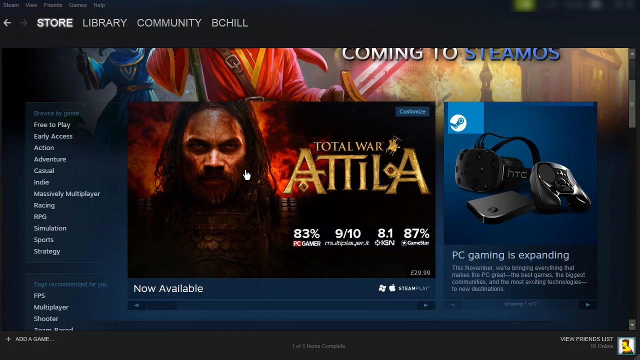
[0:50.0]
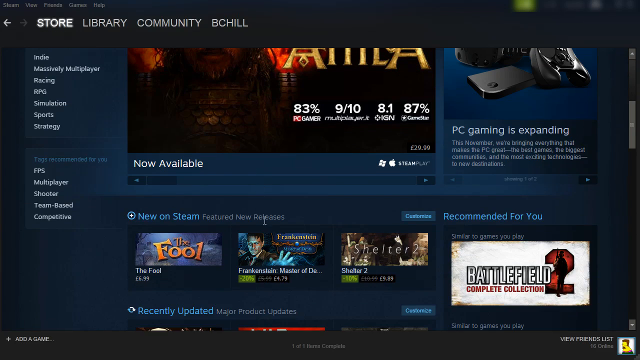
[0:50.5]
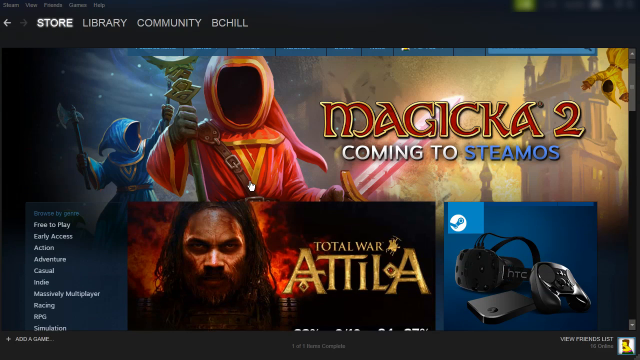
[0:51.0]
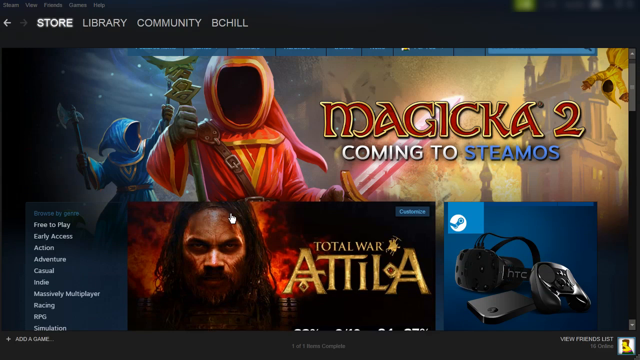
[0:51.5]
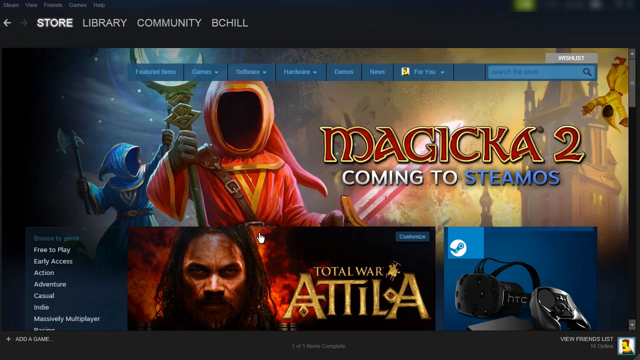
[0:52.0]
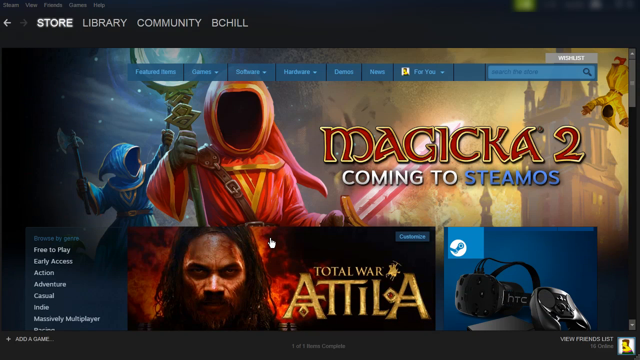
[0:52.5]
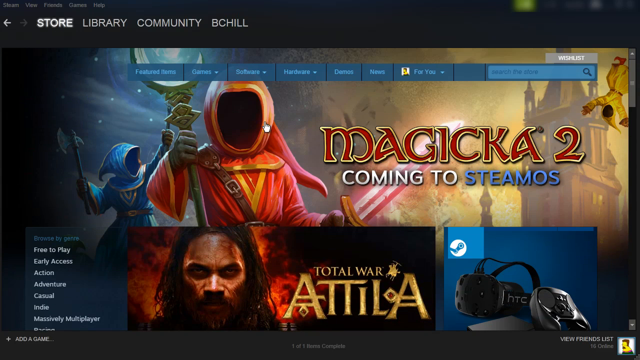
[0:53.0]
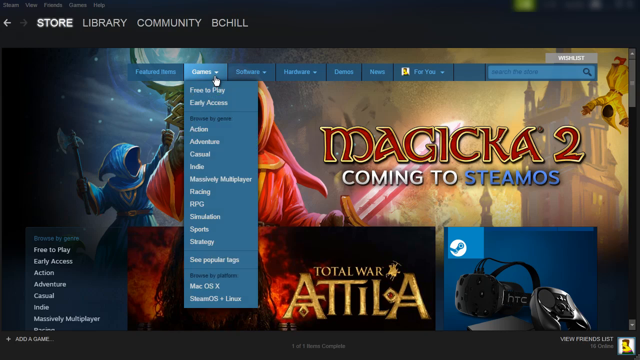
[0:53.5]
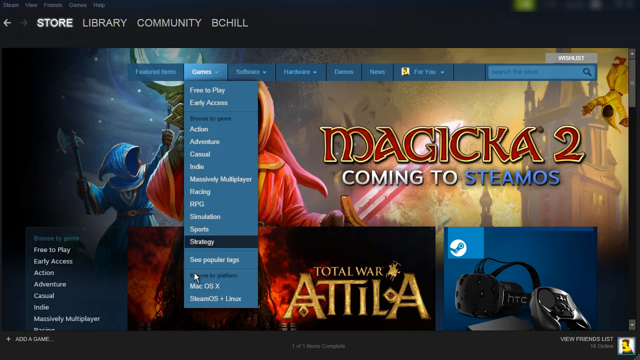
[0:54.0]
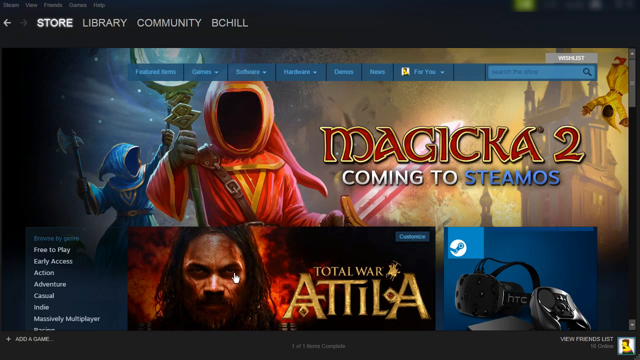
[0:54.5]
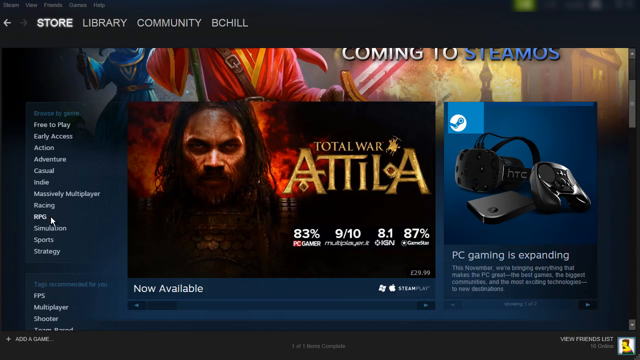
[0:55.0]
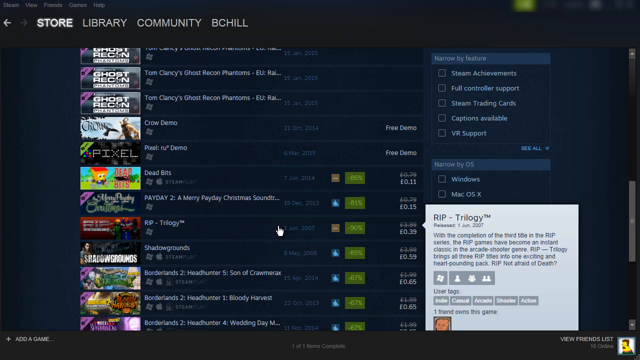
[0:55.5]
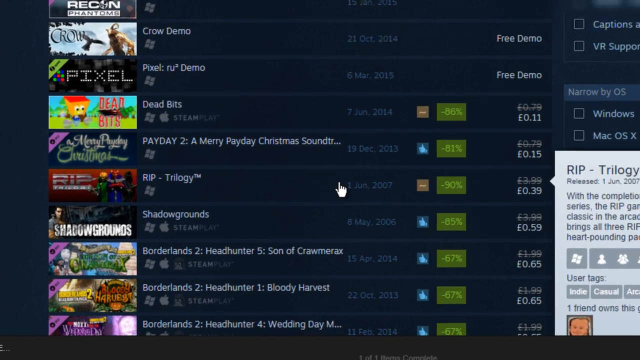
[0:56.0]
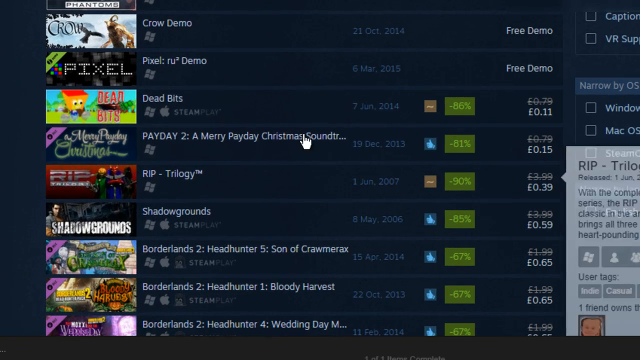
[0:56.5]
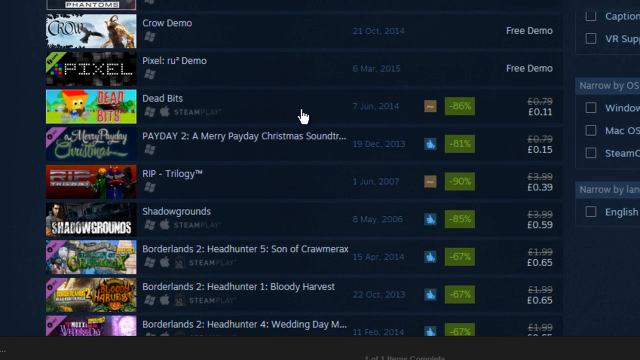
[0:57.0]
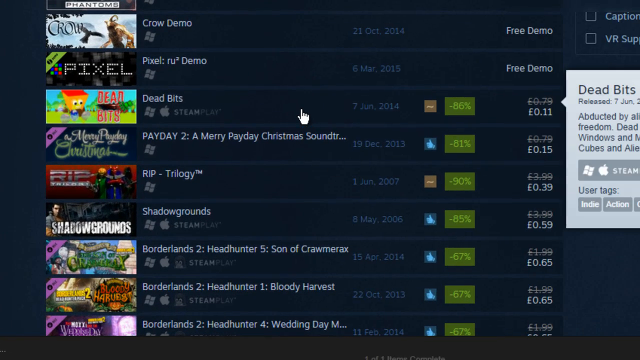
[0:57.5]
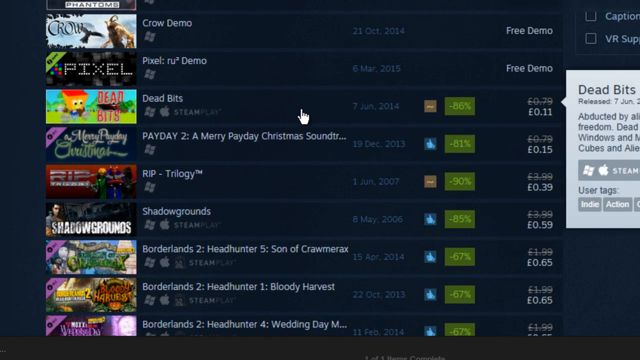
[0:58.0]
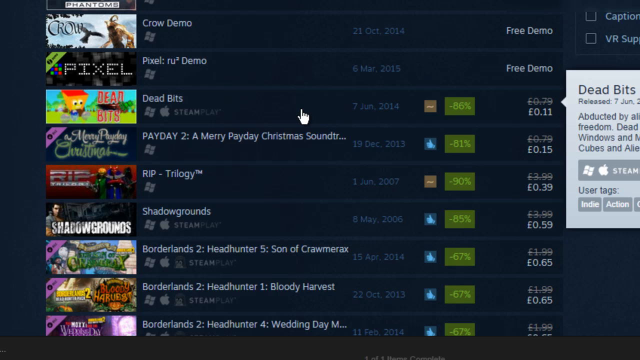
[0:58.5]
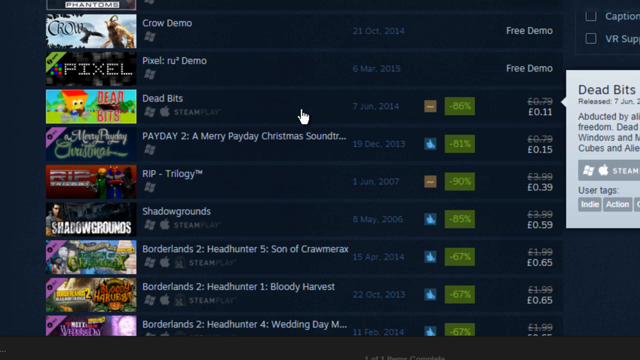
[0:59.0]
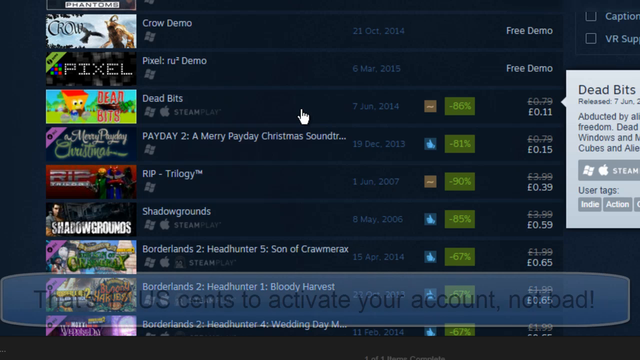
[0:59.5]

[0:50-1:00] The store front page now features a new game, Magicka 2, coming to SteamOS, with a picture of wizards in different cloaks. The first wizard, facing forward, wears an orange cloak with gold trimmings and a V on its chest and carries a staff. The wizard behind him wears the same cloak attire but in blue, and has an axe and something like a wand. The user goes to the game ribbon in the browser and scrolls down to see games, then chooses Dead Bits, released on 7 June 2014. When he clicks it, a small window pops up with information about Dead Bits: what it is about and where it can be played, on Windows, Apple or Steam Play.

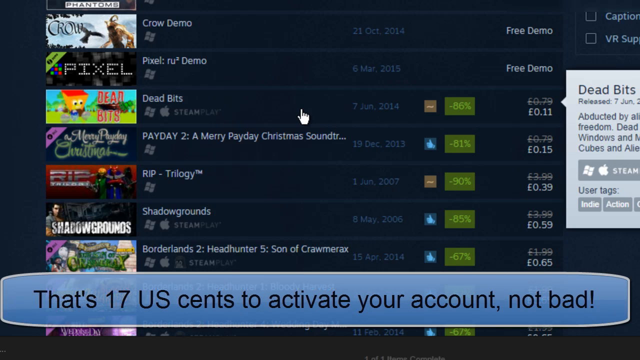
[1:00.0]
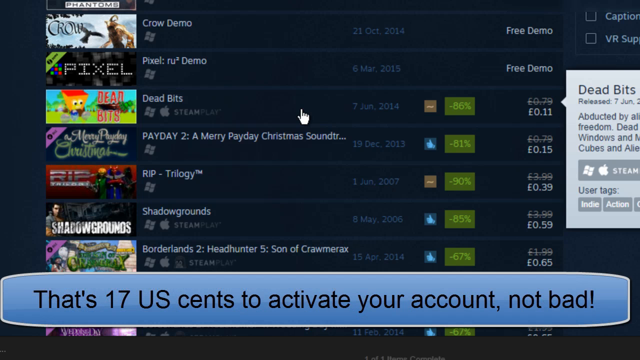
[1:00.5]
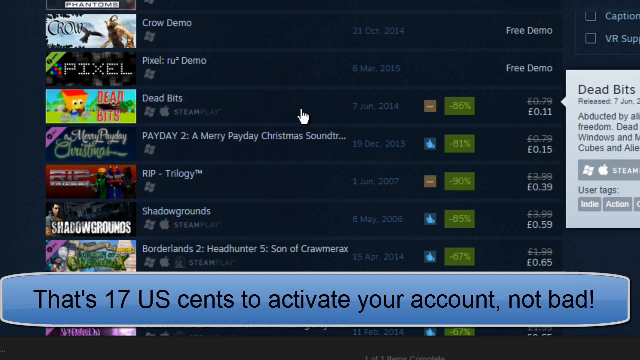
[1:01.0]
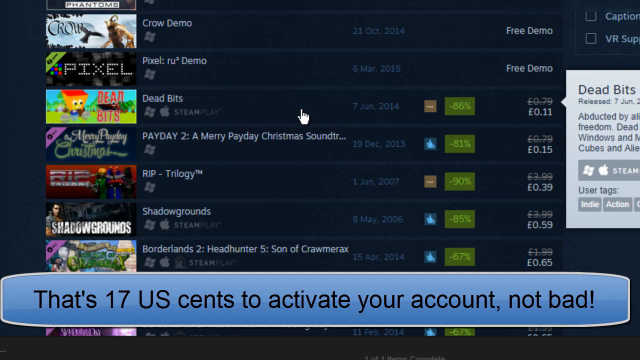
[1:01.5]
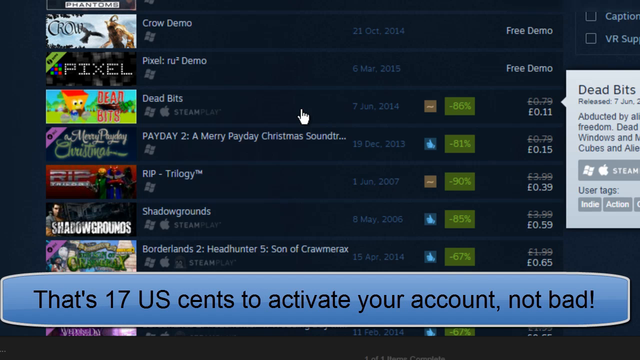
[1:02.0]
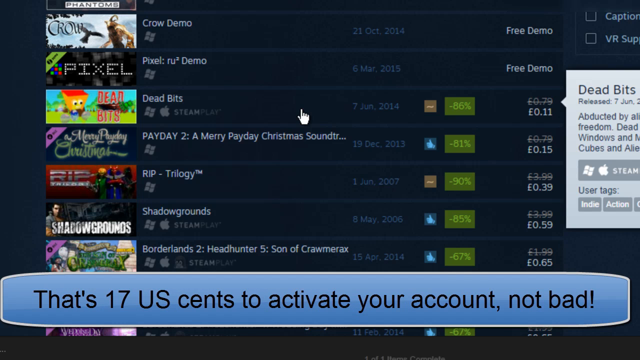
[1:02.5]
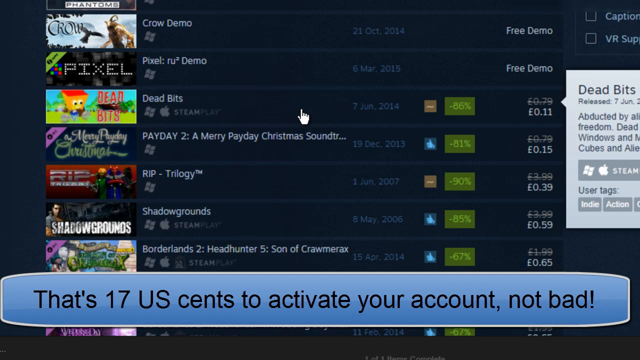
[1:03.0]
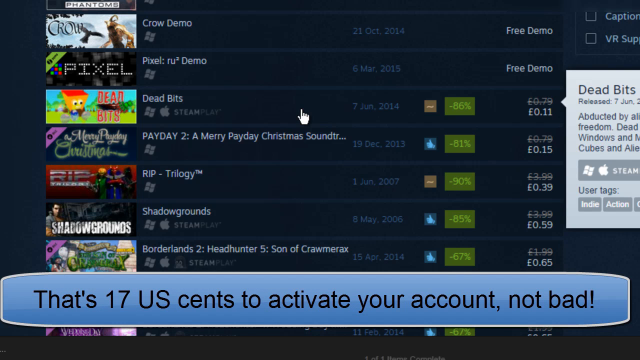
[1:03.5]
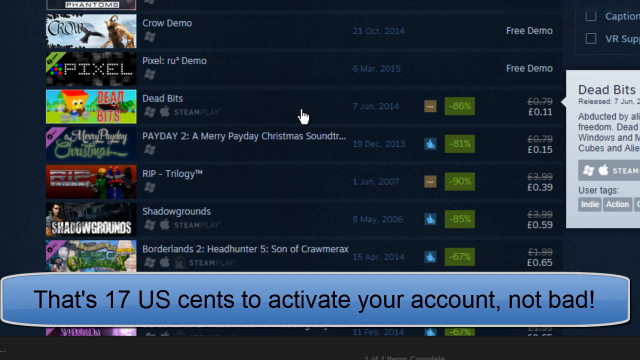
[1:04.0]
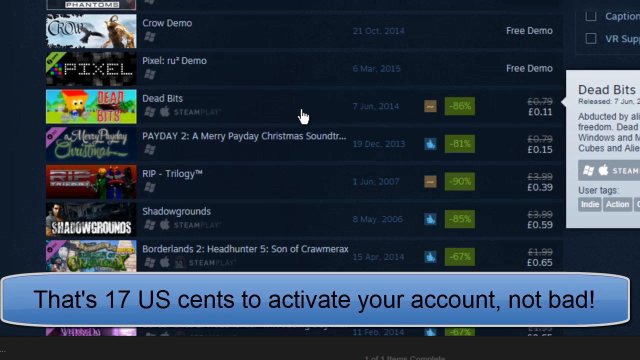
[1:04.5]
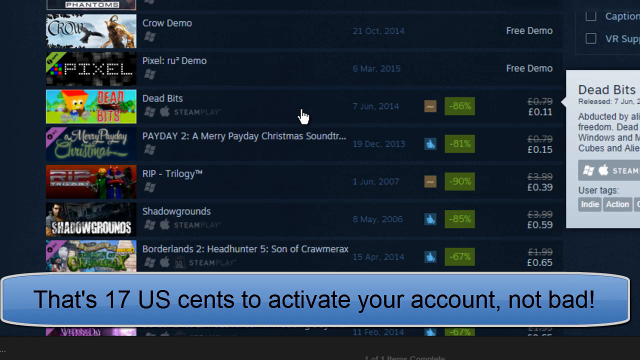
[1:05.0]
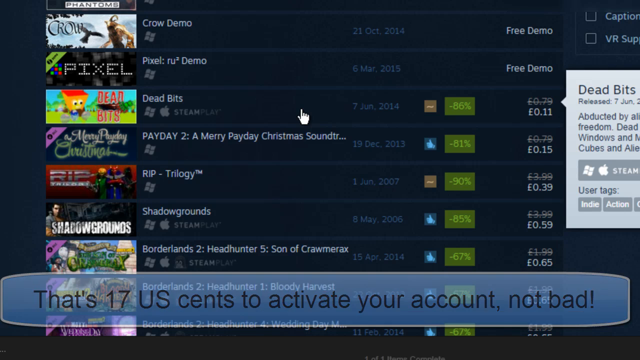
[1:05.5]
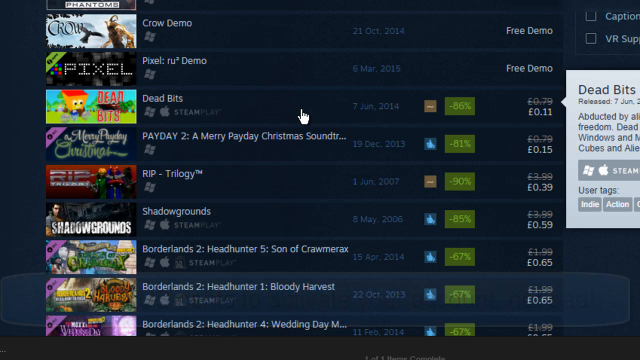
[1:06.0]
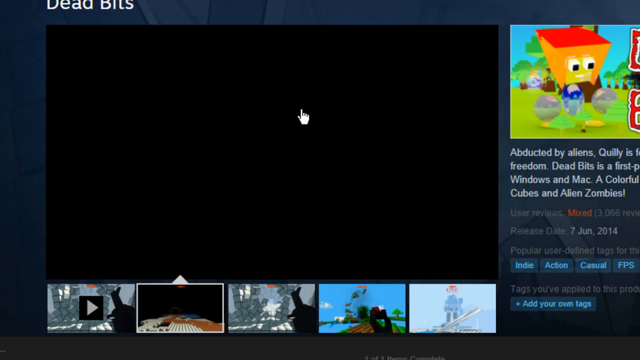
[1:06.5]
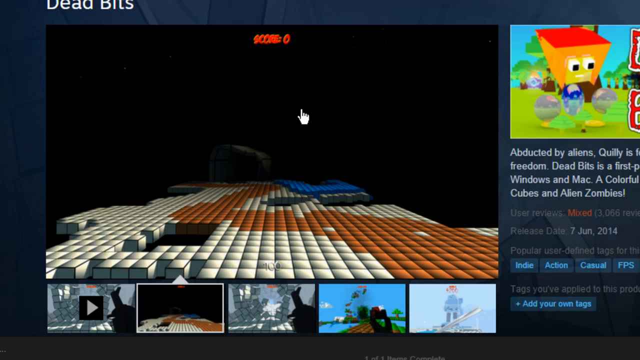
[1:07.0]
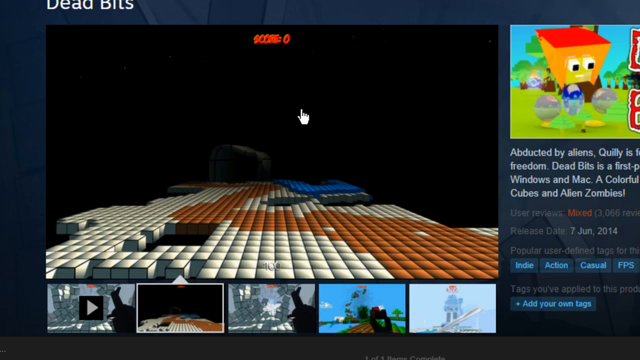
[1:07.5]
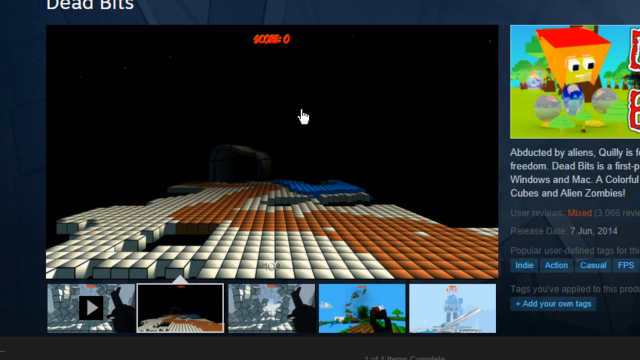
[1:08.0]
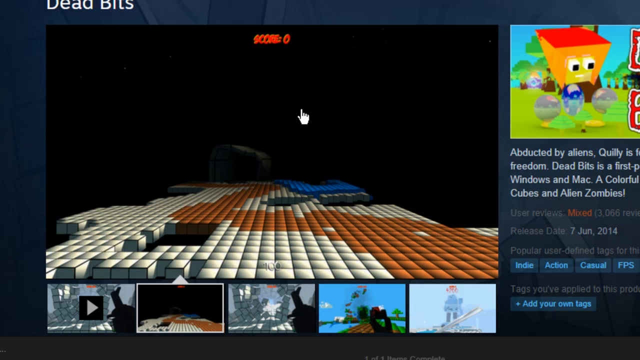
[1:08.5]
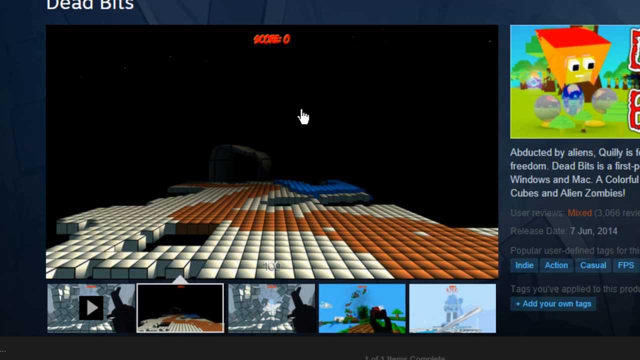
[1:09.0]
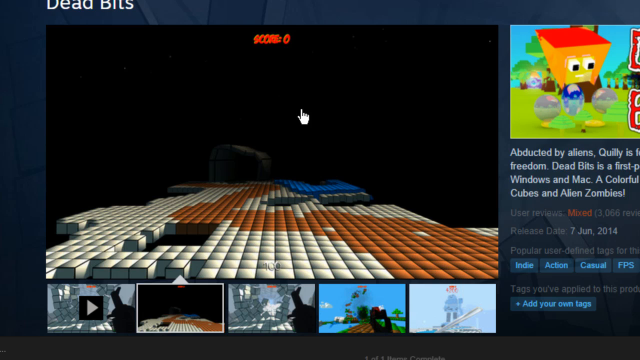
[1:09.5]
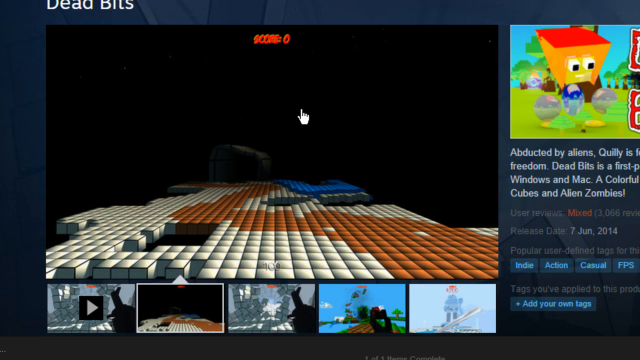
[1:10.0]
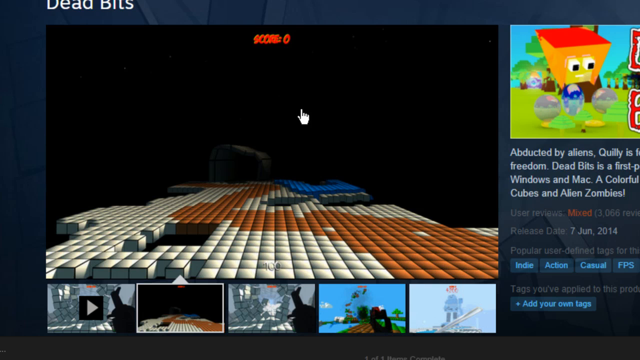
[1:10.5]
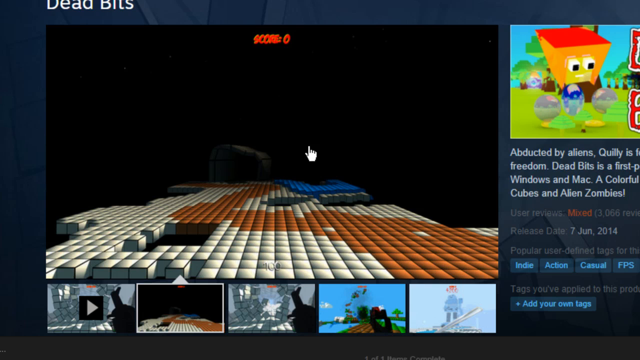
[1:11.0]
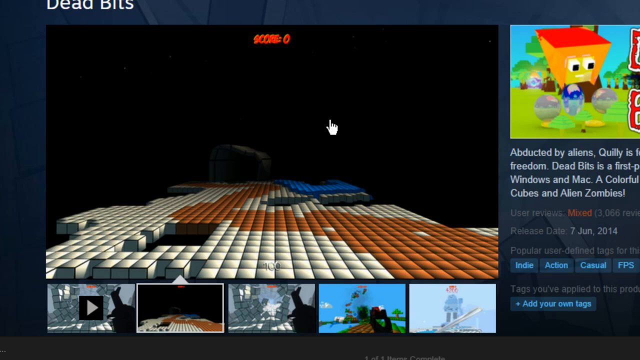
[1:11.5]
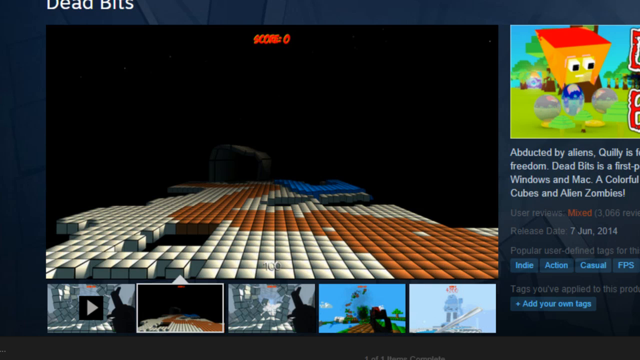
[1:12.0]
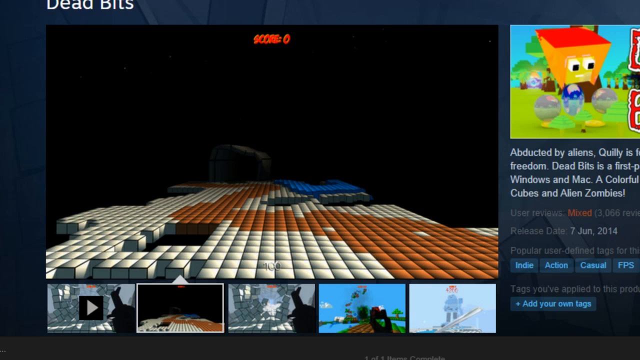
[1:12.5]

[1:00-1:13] As he clicks on Dead Bits, a bubble appears at the bottom that says "that's 17 US cents to activate your account, not bad". He then apparently clicks on Dead Bits, opening a page with a video preview of the gameplay and screenshots of the game under the video, with the game's description on the right. The page also shows user reviews (3,066 reviews), the release date and tags, which classify it as an indie, action, casual, first-person shooter game. He then goes back to the game list.